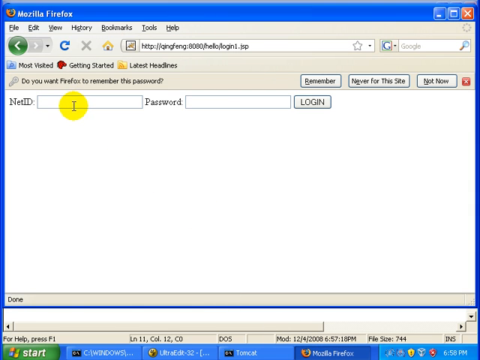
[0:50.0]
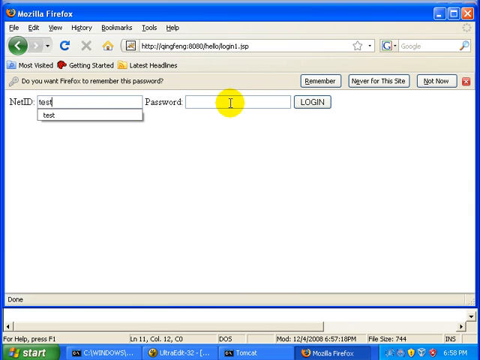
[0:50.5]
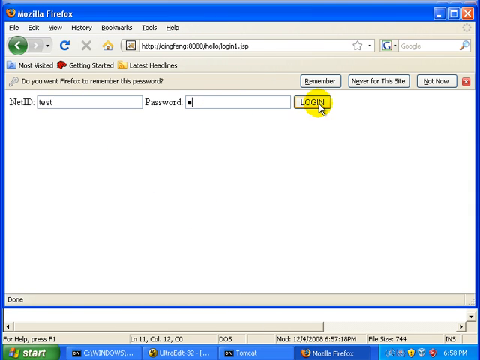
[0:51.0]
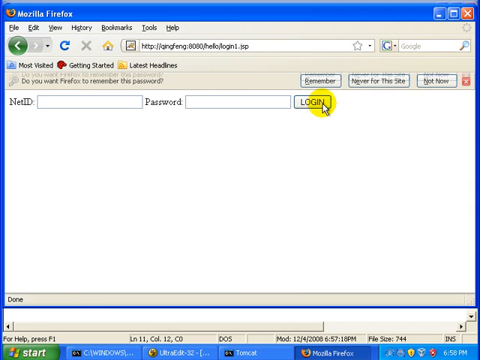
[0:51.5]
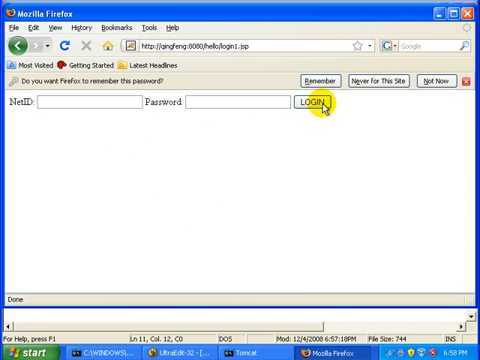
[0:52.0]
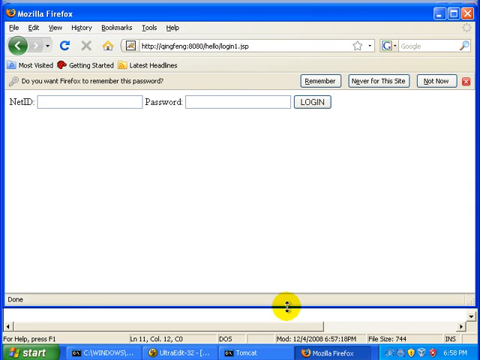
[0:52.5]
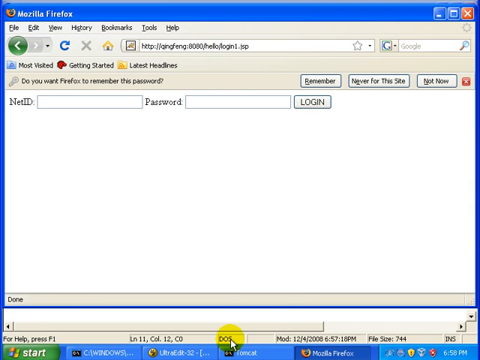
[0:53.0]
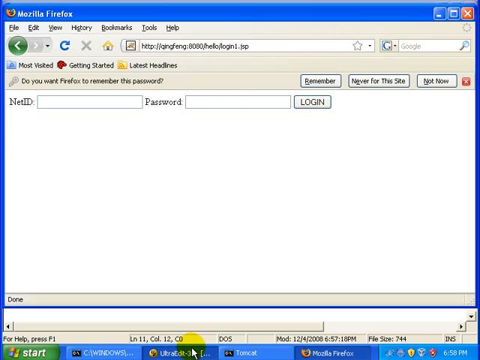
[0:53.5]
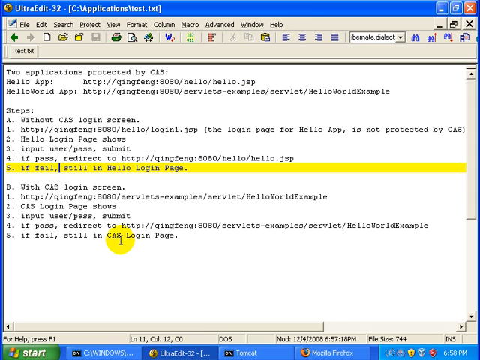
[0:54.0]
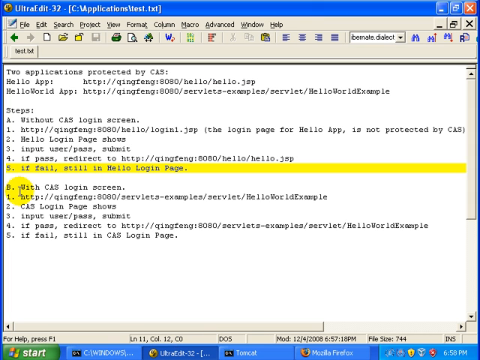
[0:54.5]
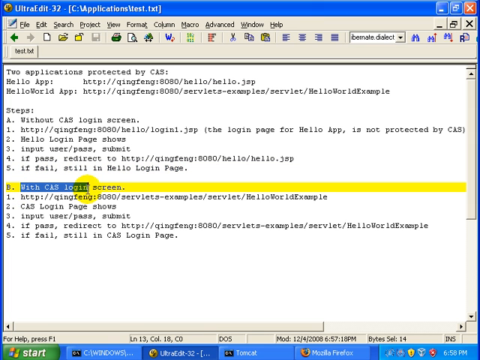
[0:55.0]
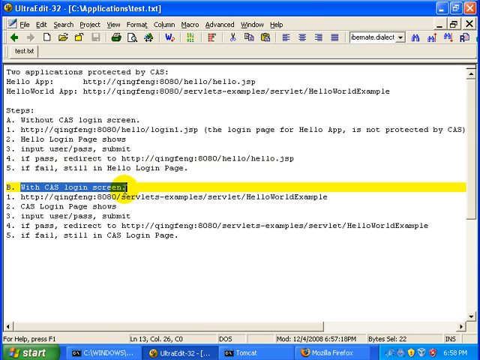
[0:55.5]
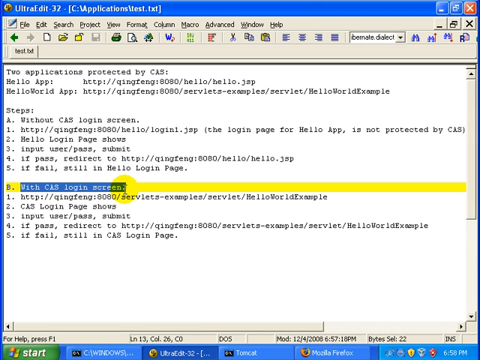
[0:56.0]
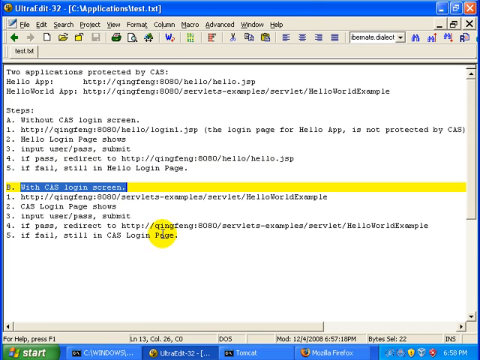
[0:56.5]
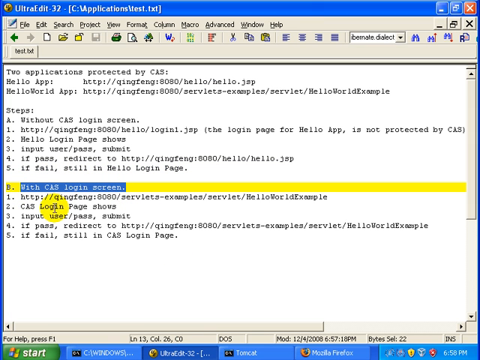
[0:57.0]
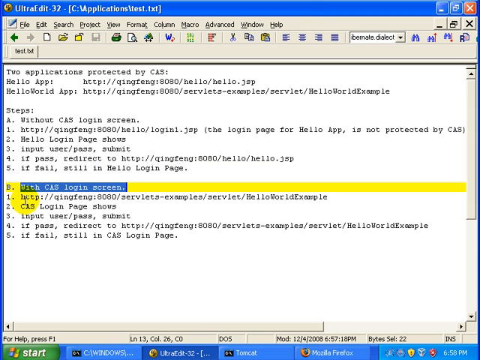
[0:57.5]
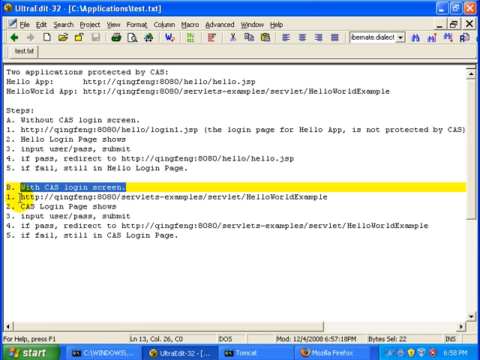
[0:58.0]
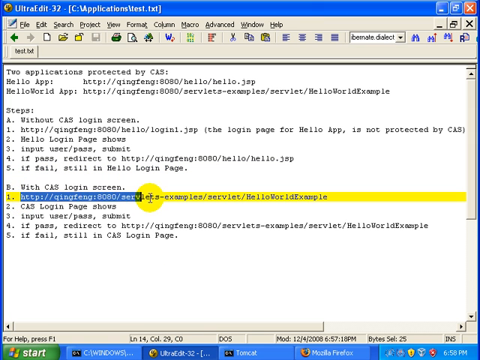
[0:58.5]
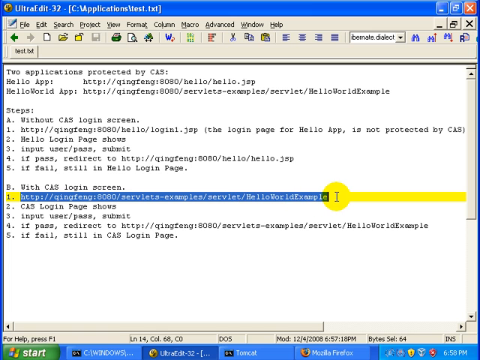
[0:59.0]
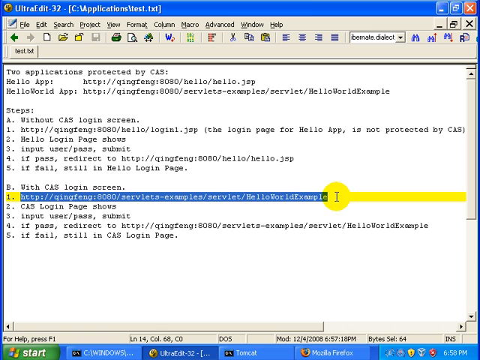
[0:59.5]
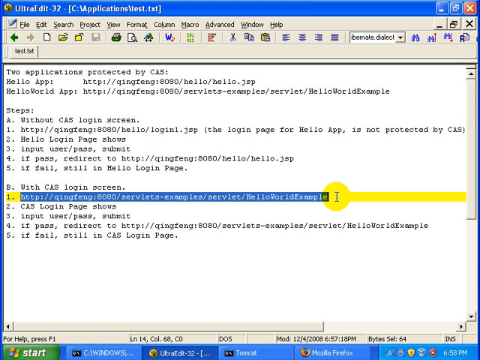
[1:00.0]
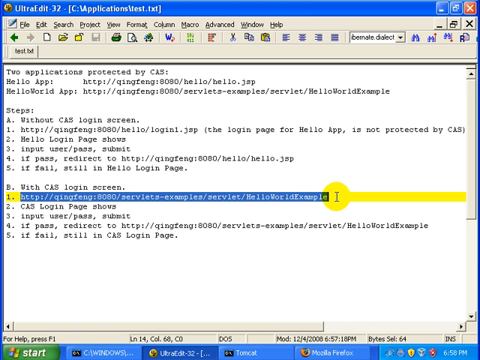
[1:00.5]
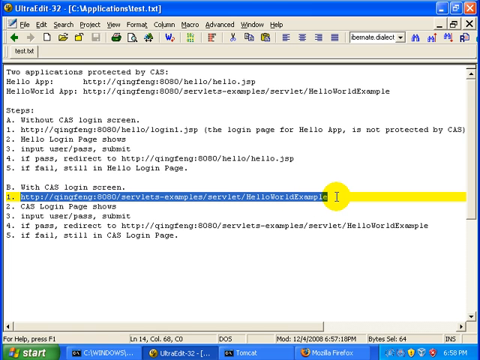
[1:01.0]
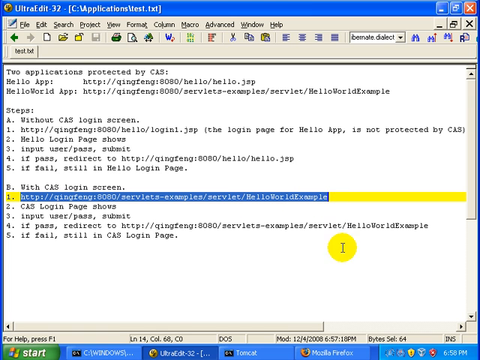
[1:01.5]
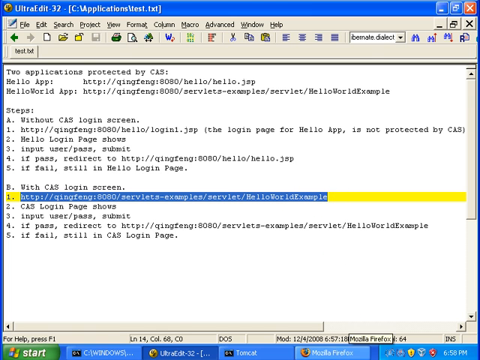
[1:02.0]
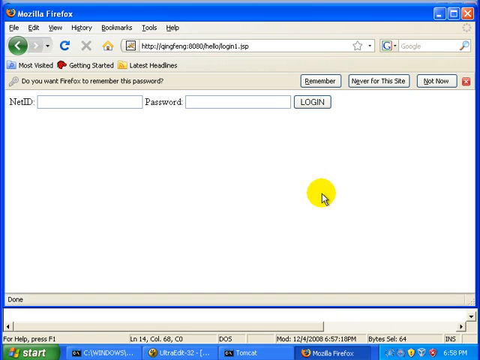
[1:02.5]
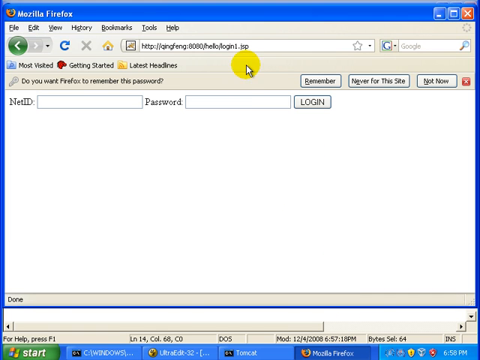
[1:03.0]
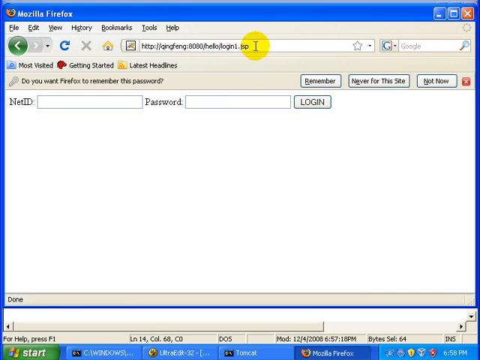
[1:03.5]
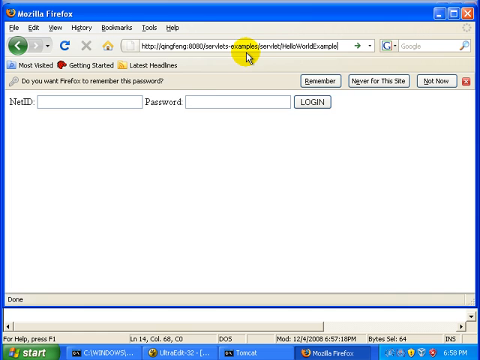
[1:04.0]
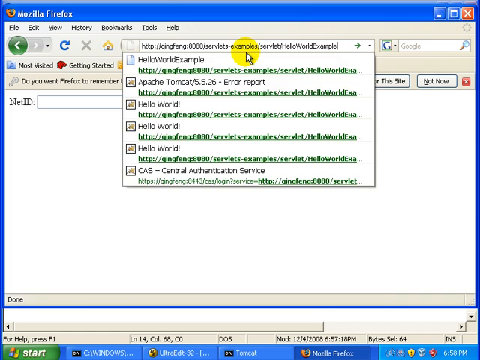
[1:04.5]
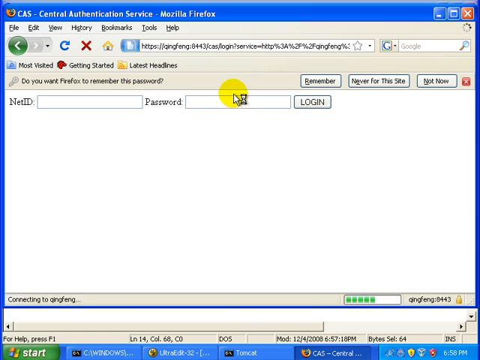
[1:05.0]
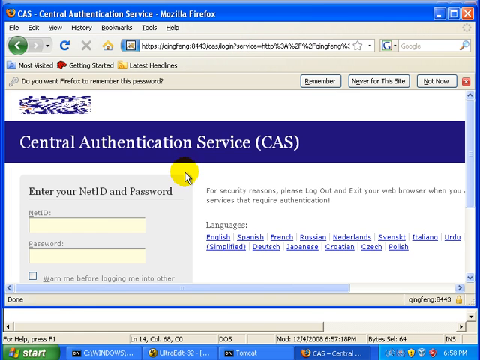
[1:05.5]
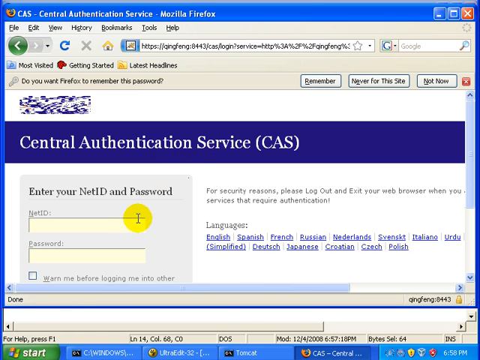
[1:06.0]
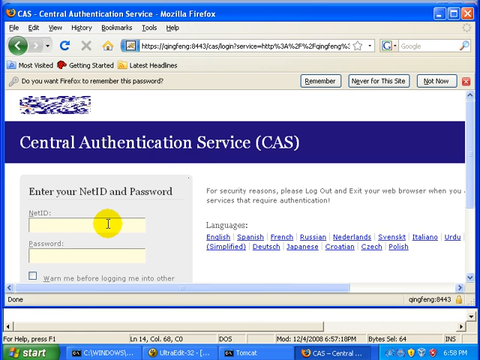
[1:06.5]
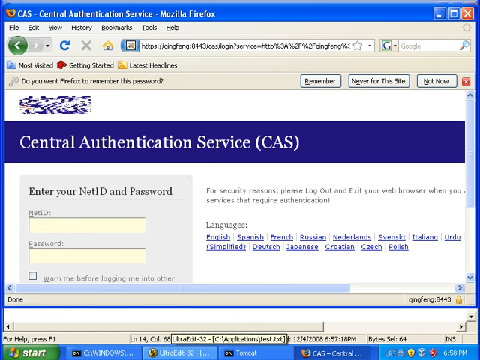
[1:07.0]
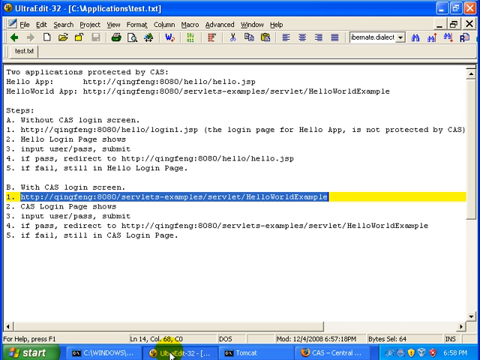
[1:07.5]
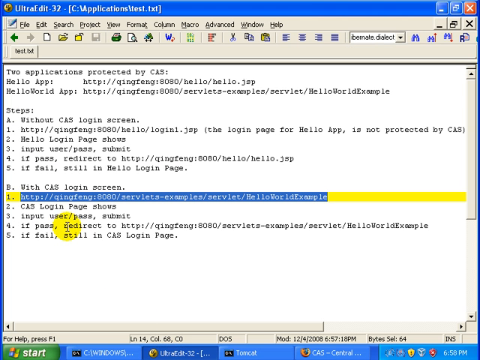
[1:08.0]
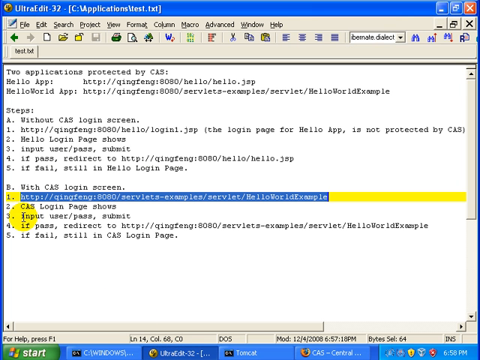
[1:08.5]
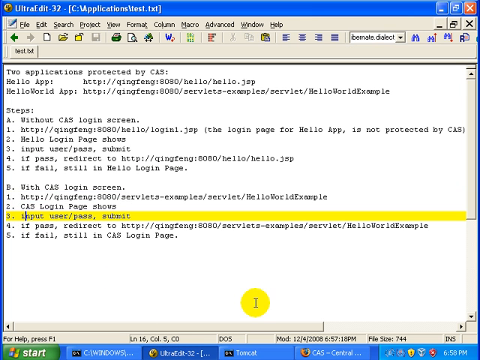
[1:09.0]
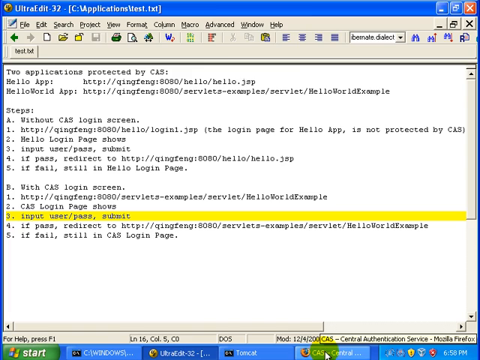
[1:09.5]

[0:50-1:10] The Firefox page shows the NetID and password fields. "test" is typed, then one letter, and login is clicked, but nothing happens. The UltraEdit file is brought back up with step A5 highlighted. Step B is highlighted, then its number 1. The cursor goes down to the bottom of the screen, where it is hard to see what is clicked; the Firefox tab is opened again. The search bar is highlighted and the servlet link from before is typed in. This brings up a website titled "Central Authentication Service (CAS)" in blue, with no logo. It has a small gray box for entering the NetID and password, and to the right of that it reads "For security reasons, please log out and exit your web browser when you..." There is also a list of languages, each a link, including English, Spanish, French, Russian, Netherlands, Italiano, Urdu, Simplified, Dutch, Japanese, Croatian, Czech and Polish. The cursor hovers over the NetID bar. UltraEdit is brought back and step B3 is highlighted.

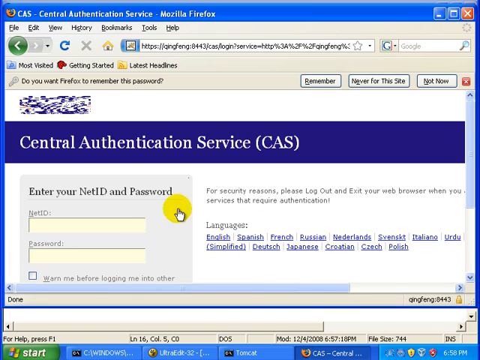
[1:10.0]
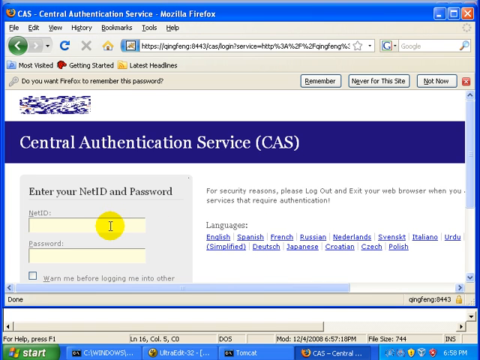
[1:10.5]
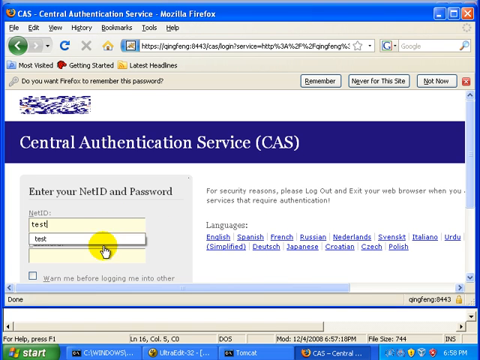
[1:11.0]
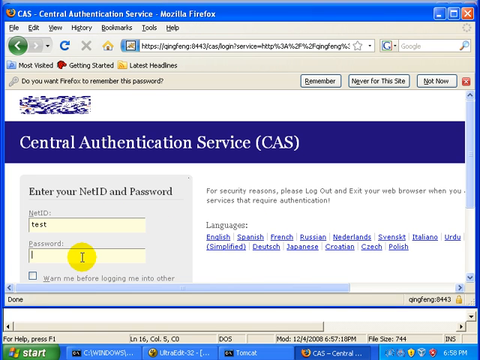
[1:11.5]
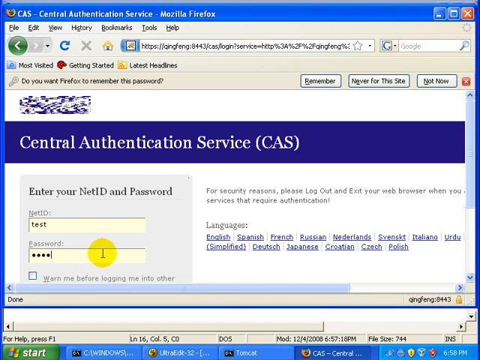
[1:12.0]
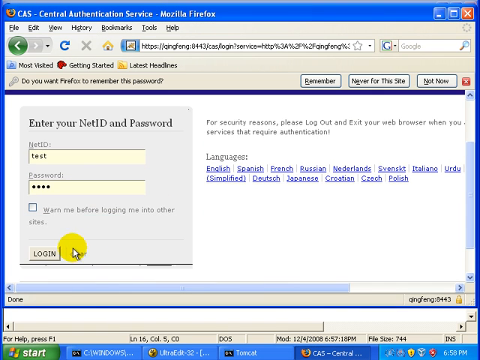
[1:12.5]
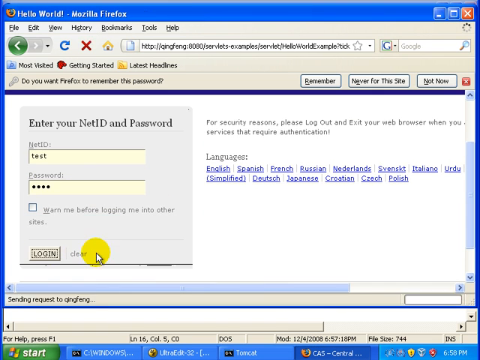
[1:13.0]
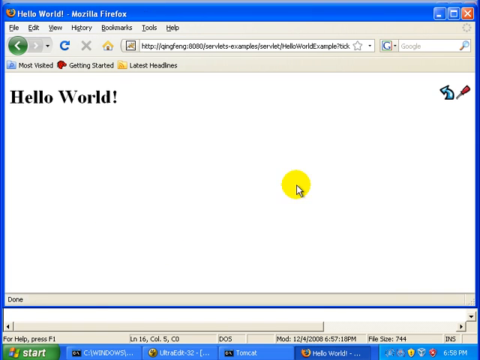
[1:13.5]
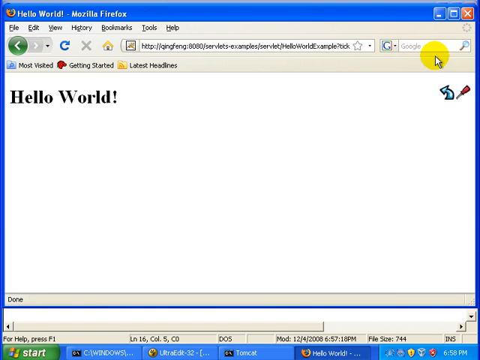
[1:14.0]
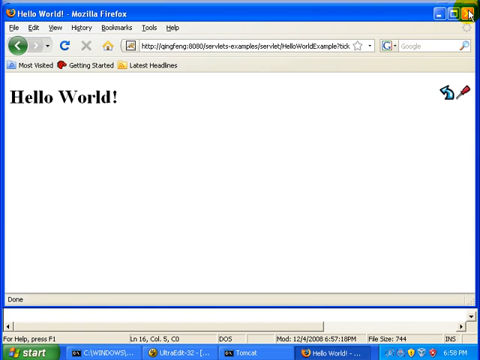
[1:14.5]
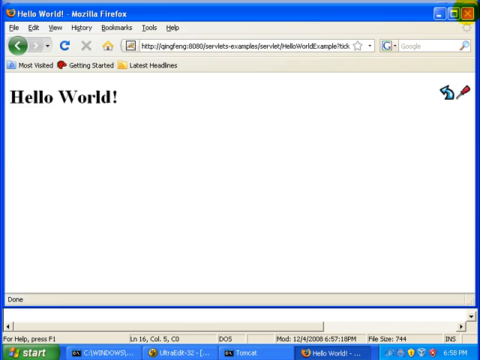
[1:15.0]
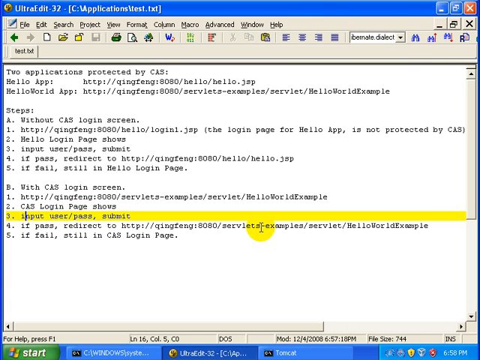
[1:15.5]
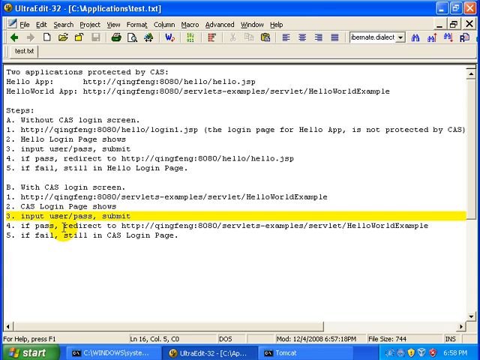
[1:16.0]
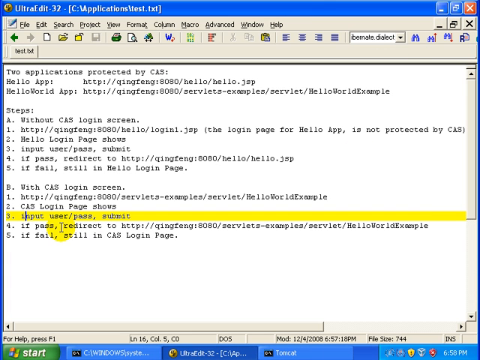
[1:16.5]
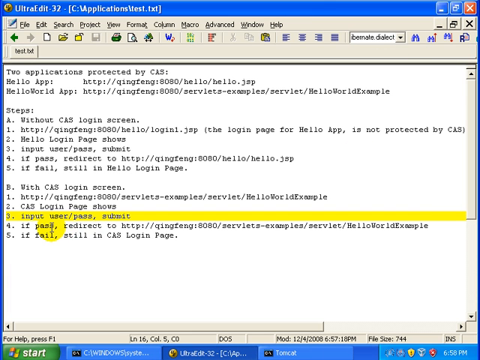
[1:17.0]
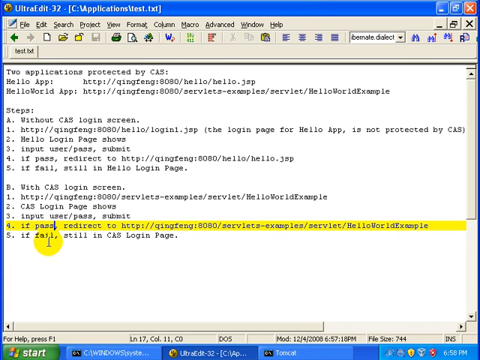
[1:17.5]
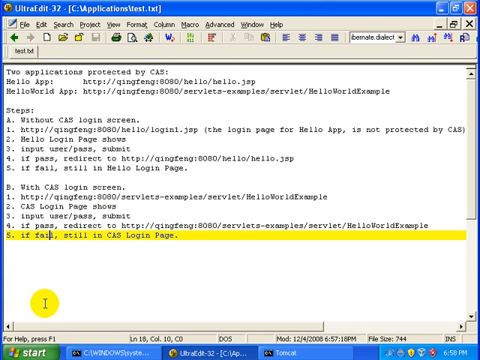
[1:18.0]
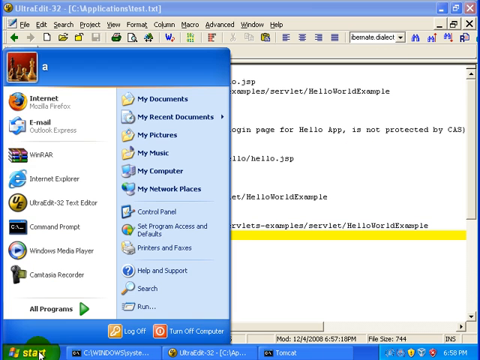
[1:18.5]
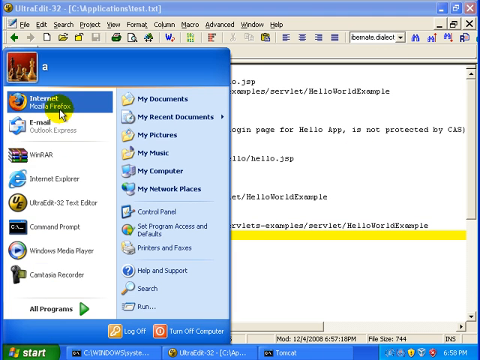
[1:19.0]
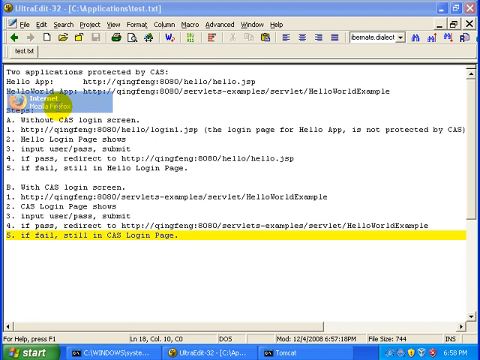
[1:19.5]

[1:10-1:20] On the Central Authentication Service website, "test" is typed into the NetID field, a four-letter password is entered, and login is clicked. A Firefox page of the servlets examples comes up, with "hello world" at the top left in big black bold letters; to the right are a little blue arrow curving upwards to the left and a red icon like a little screwdriver. The page is closed. Back in UltraEdit, the B steps three, four and five are clicked in turn, each highlighted in yellow. The computer menu bar is brought up and the cursor hovers over Internet.